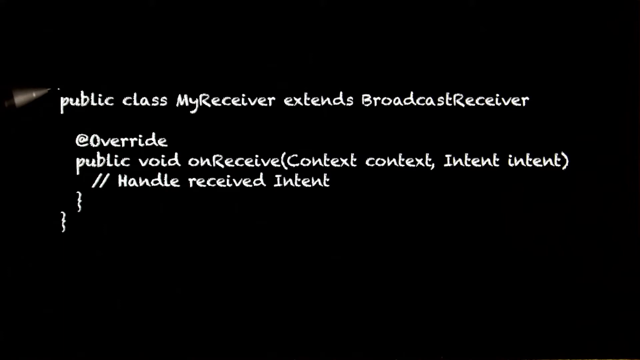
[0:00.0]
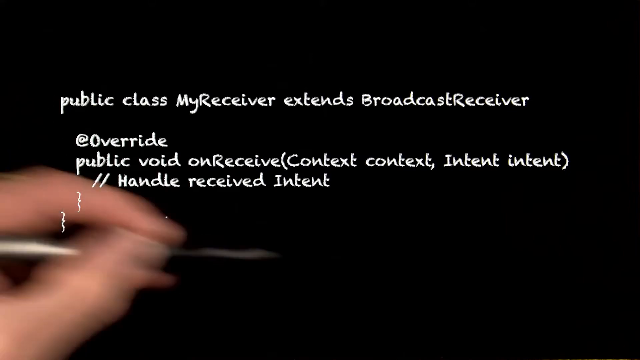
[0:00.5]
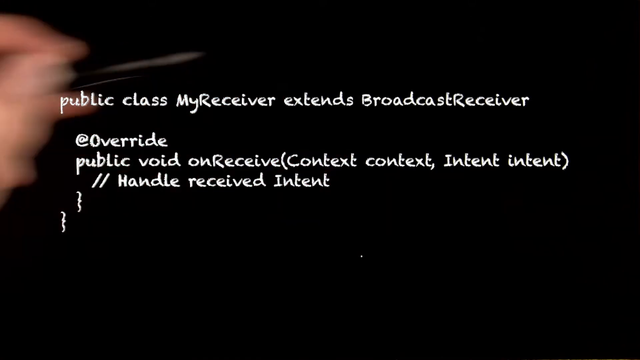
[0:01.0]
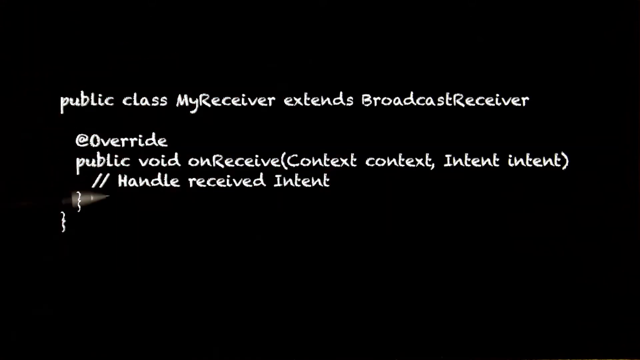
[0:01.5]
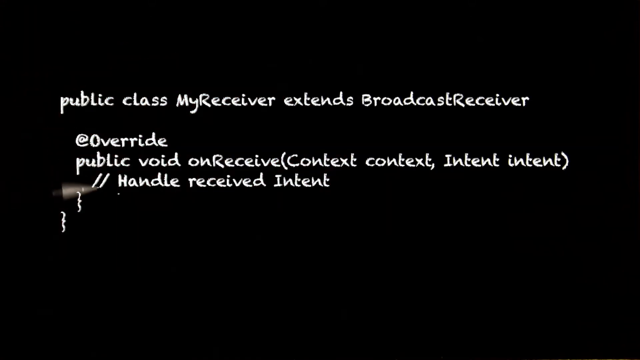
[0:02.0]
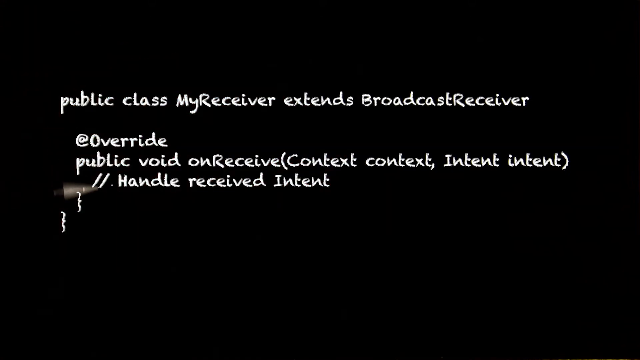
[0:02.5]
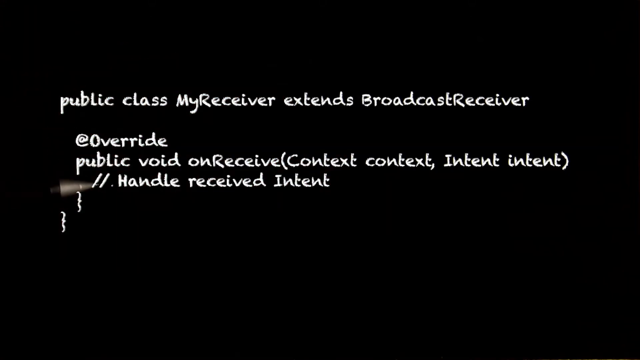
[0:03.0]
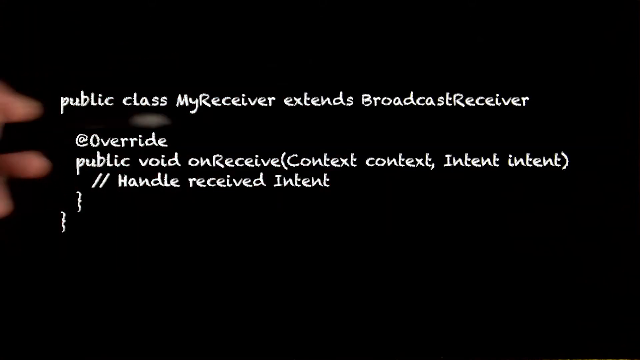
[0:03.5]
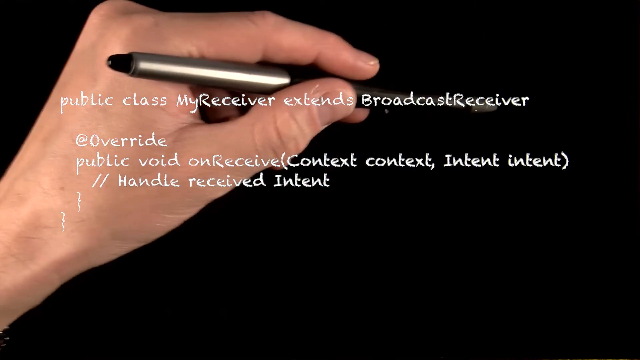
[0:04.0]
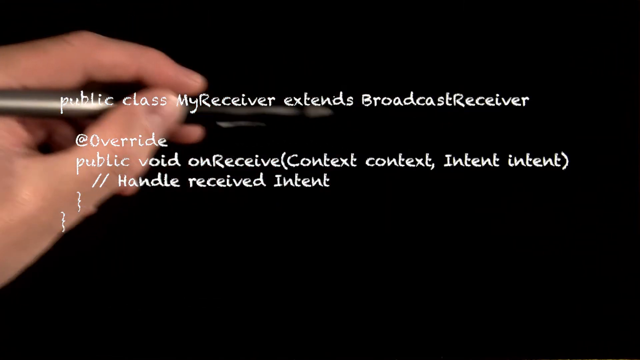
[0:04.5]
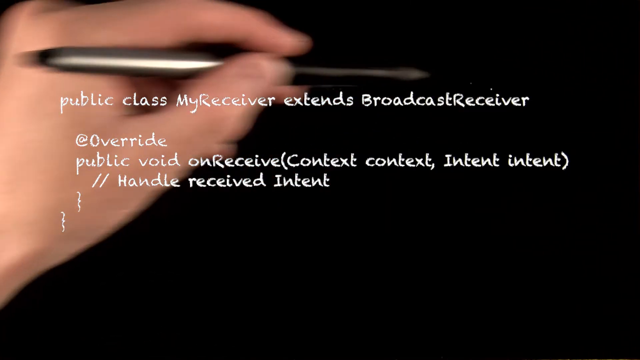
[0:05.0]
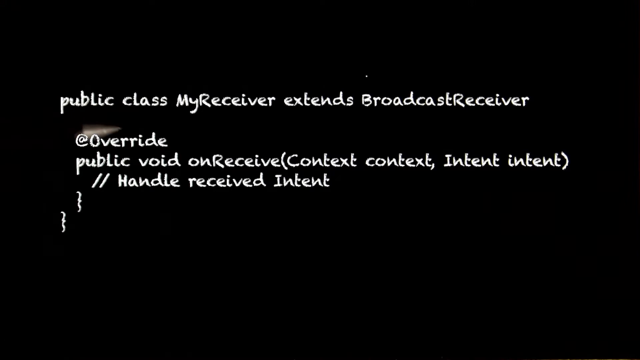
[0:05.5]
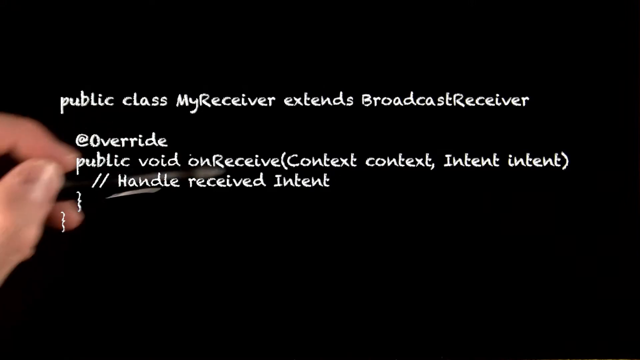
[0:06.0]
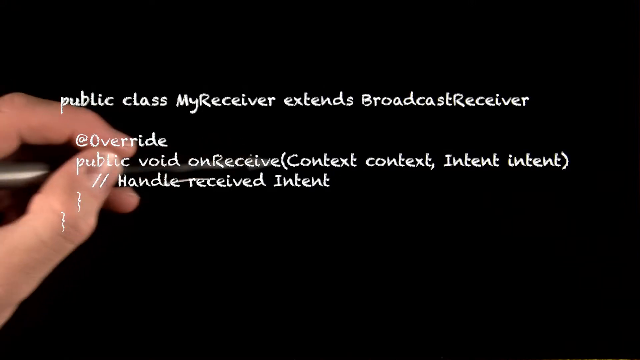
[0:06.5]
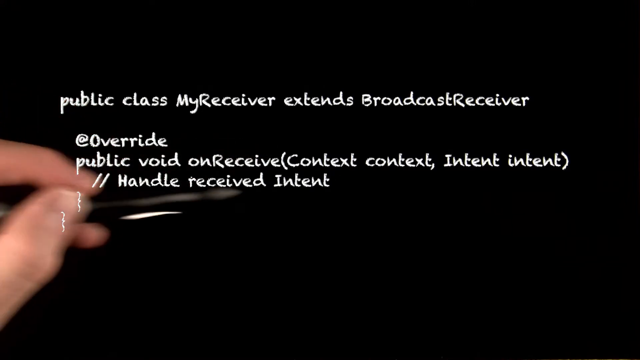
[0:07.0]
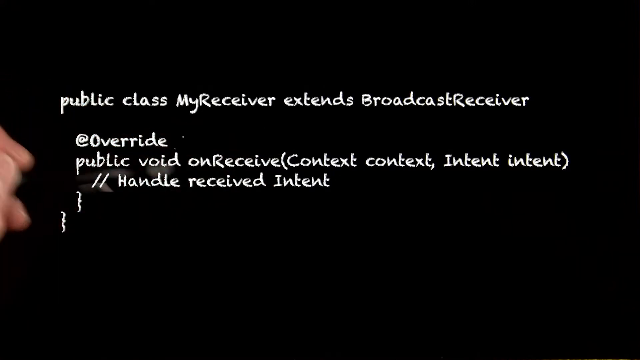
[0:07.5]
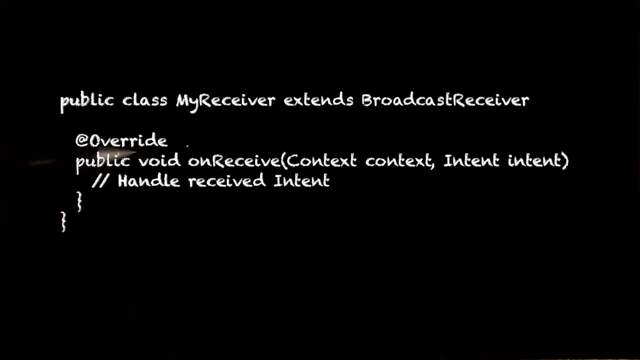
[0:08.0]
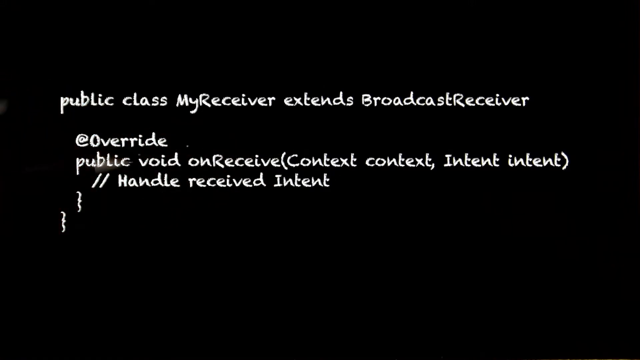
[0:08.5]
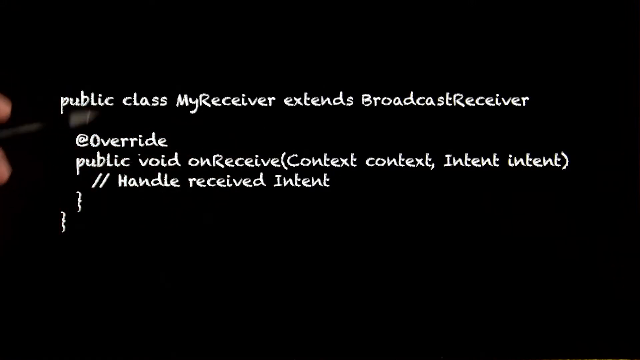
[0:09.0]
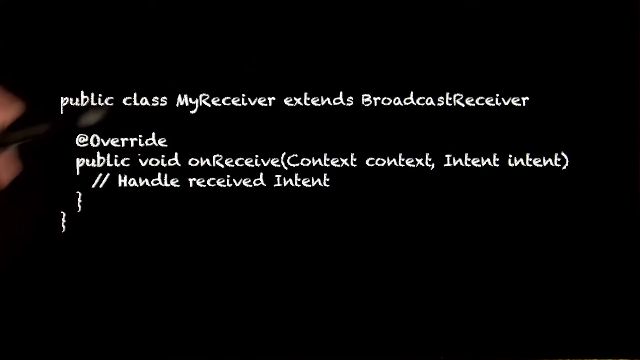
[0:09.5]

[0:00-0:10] Text on the screen includes "public class my receiver extends broadcast receiver," suggesting some type of technology video. In the background, someone holds a pen in their left hand and moves it in circular movements across the very back part of the video screen. There may be some type of felt on a board back there, and the person seems to be either moving something around or drawing on it. The text stays at the front of the screen.